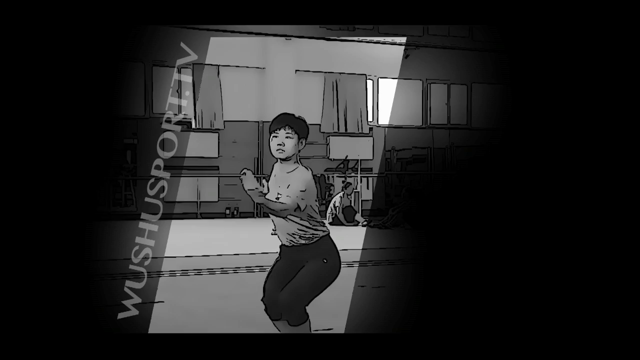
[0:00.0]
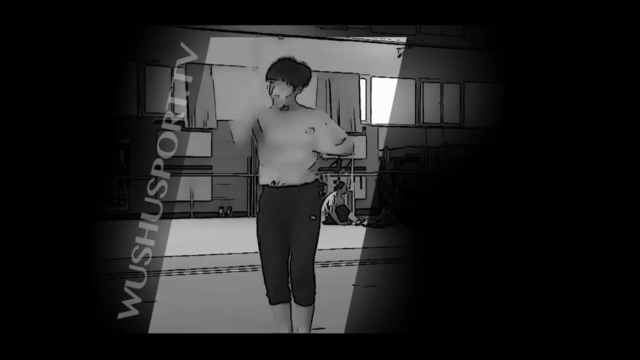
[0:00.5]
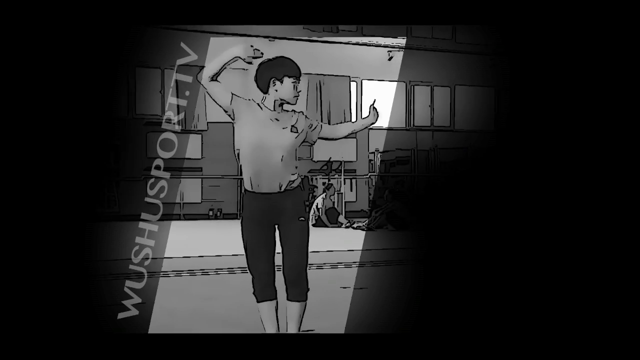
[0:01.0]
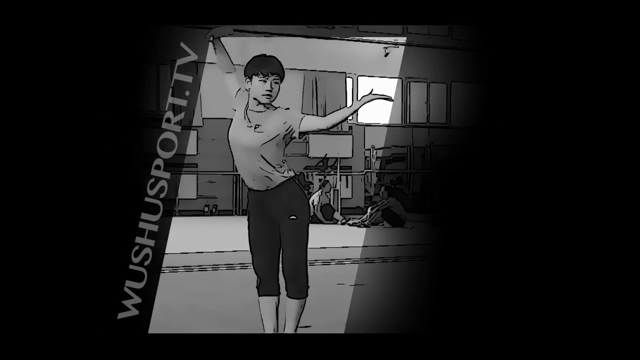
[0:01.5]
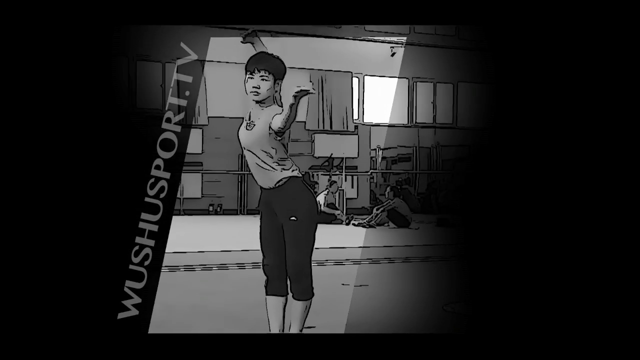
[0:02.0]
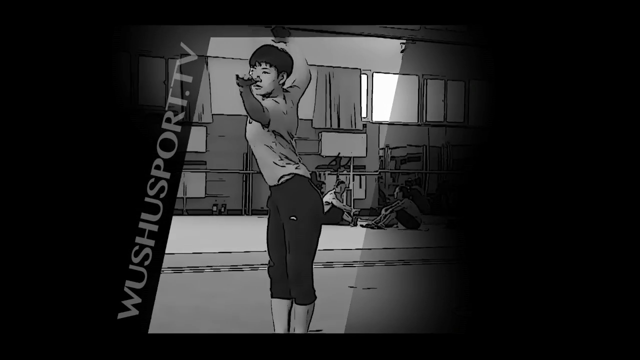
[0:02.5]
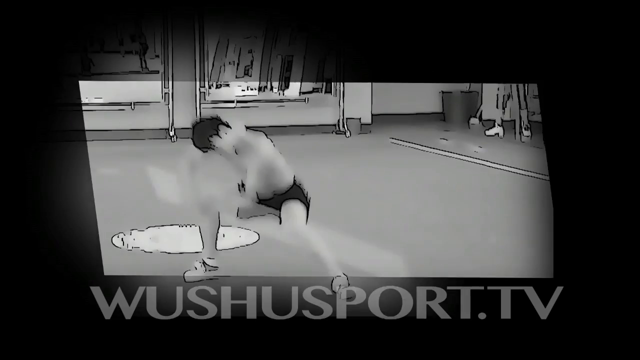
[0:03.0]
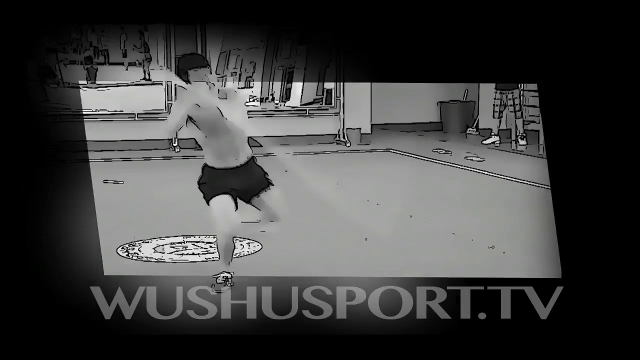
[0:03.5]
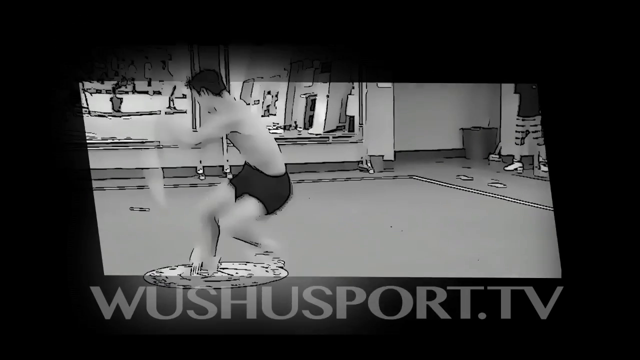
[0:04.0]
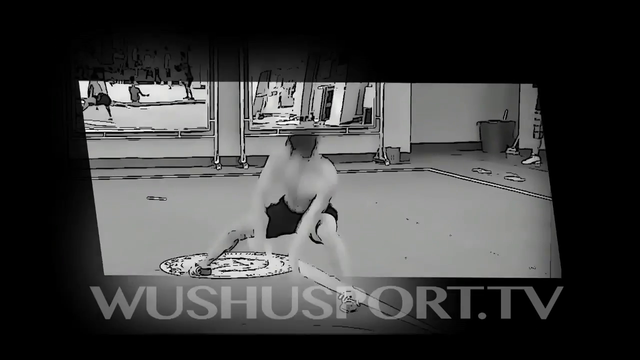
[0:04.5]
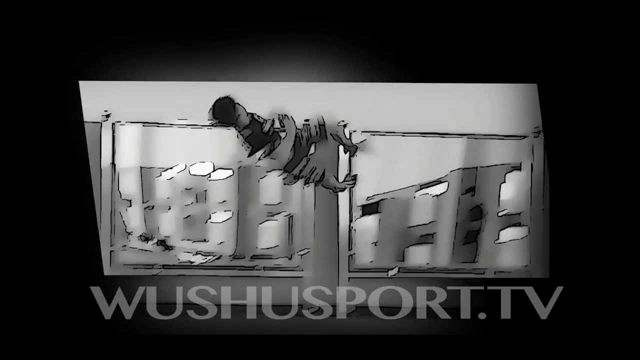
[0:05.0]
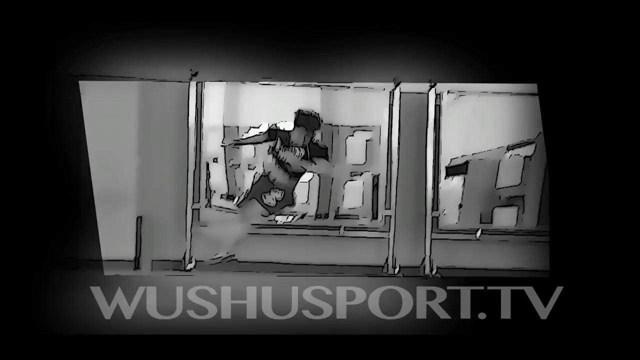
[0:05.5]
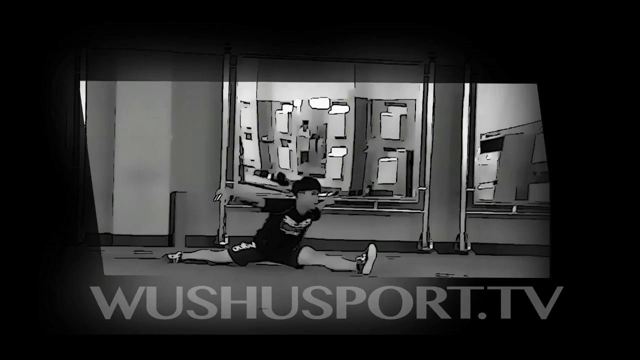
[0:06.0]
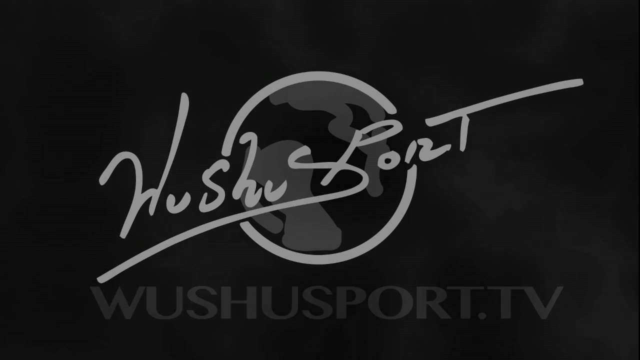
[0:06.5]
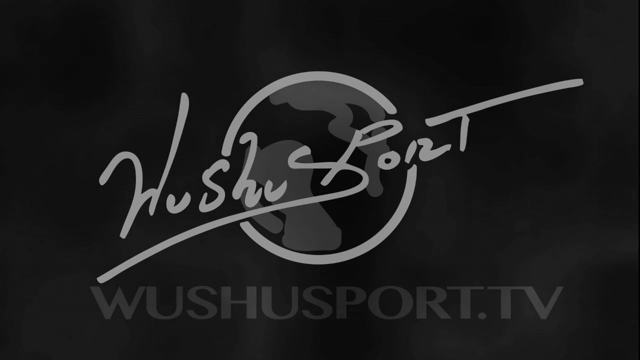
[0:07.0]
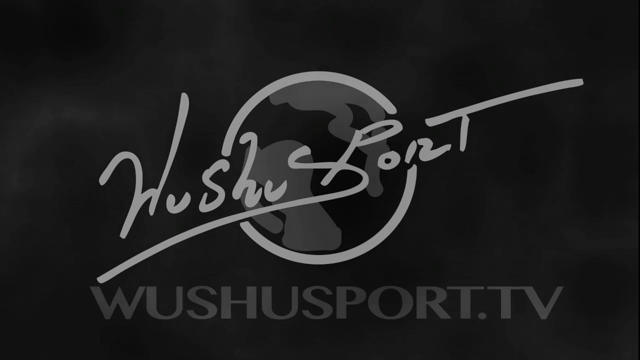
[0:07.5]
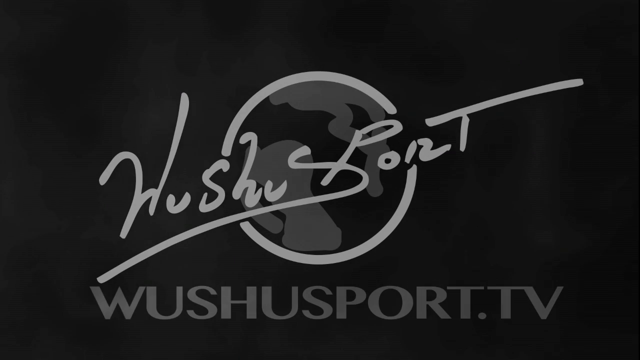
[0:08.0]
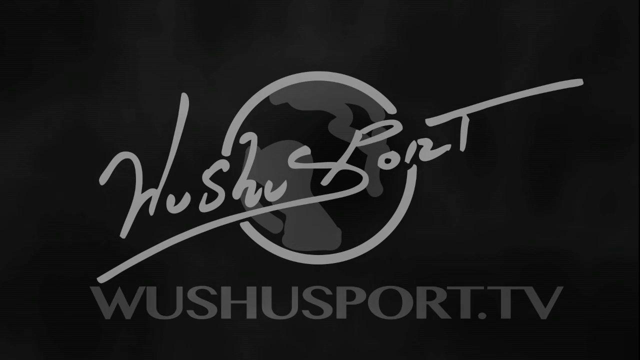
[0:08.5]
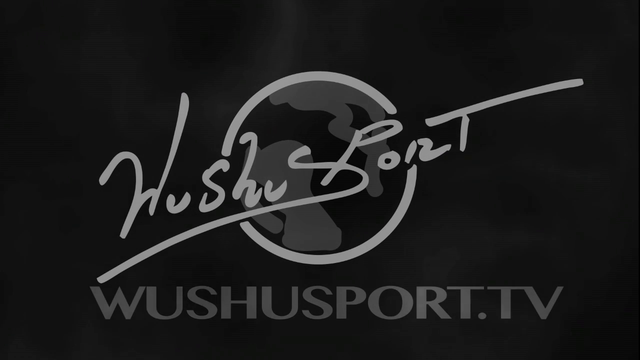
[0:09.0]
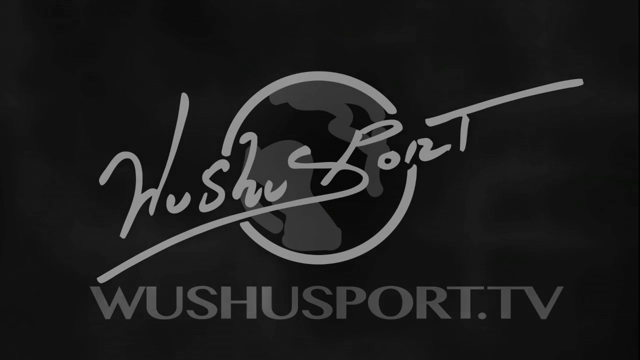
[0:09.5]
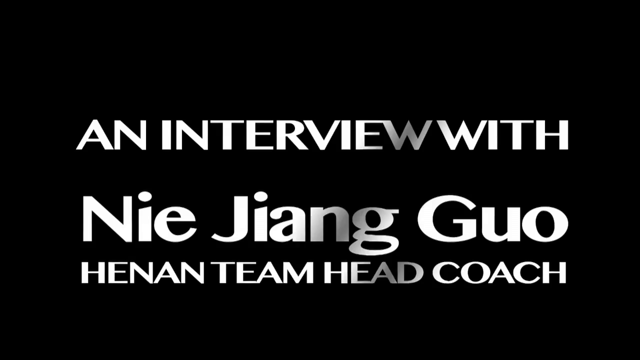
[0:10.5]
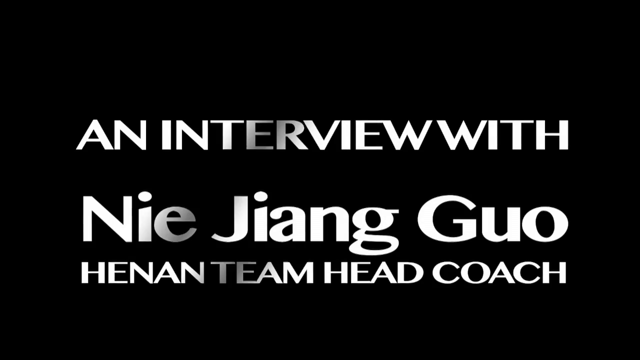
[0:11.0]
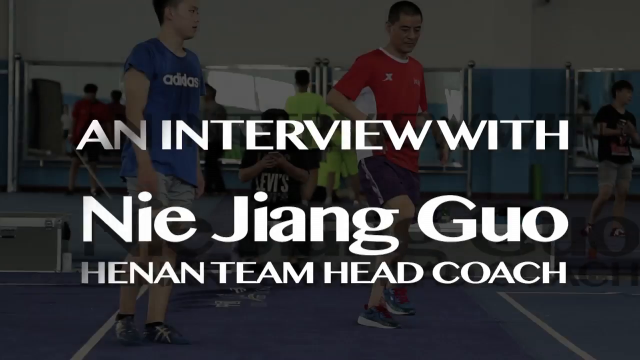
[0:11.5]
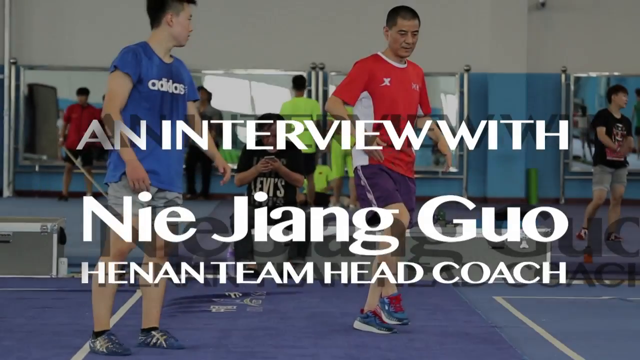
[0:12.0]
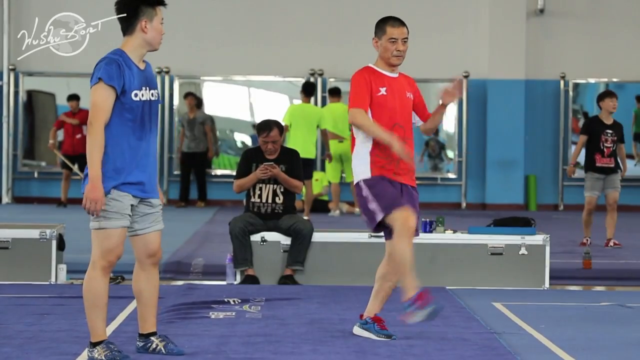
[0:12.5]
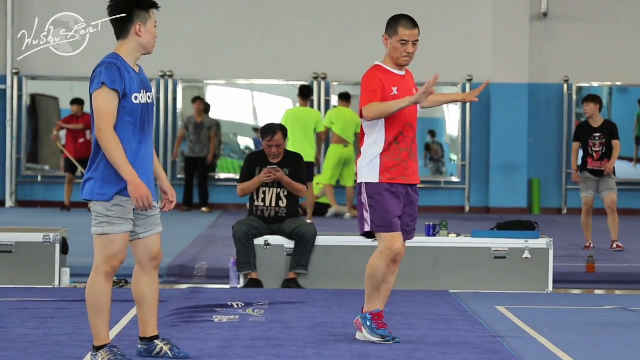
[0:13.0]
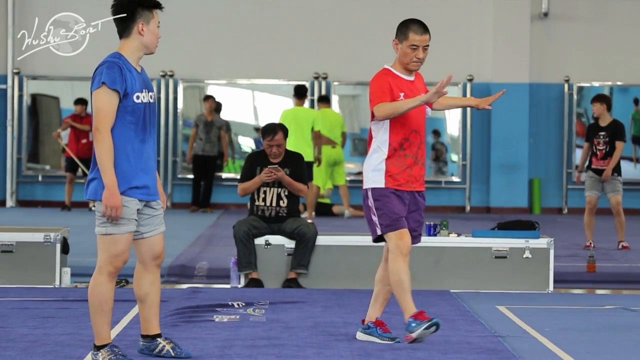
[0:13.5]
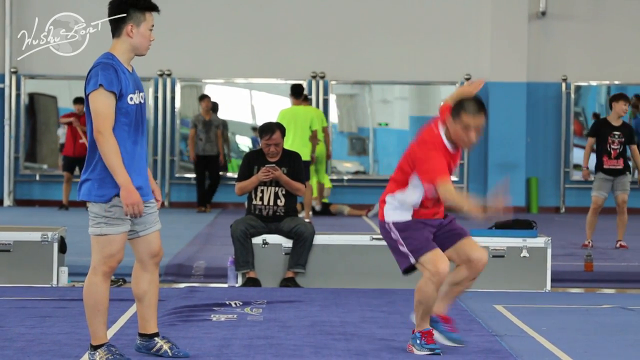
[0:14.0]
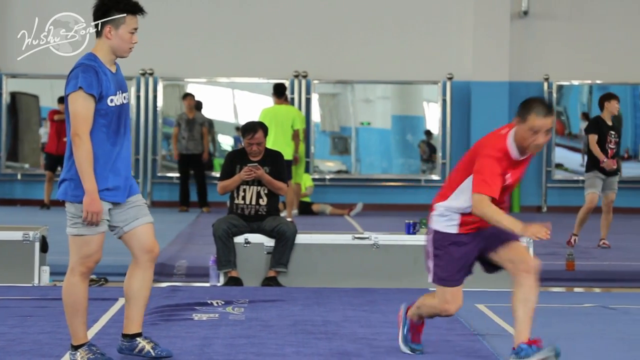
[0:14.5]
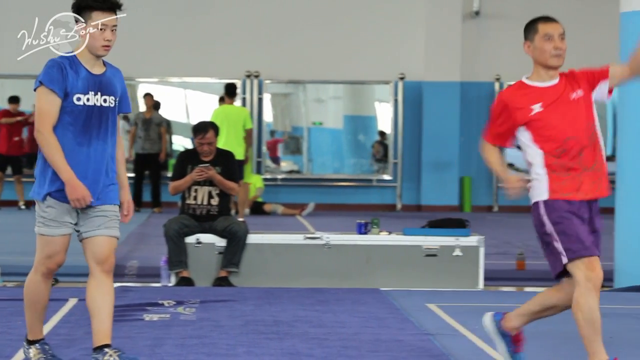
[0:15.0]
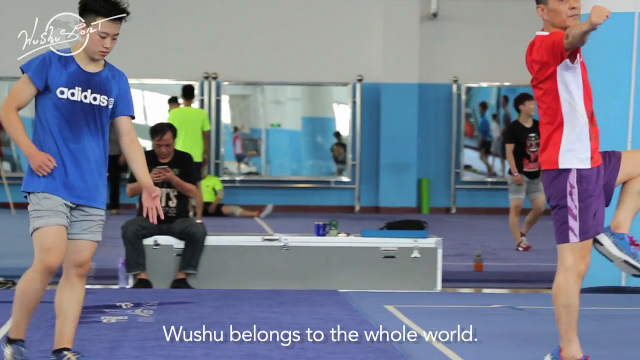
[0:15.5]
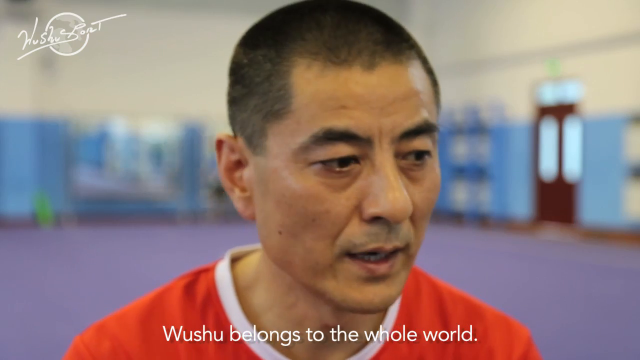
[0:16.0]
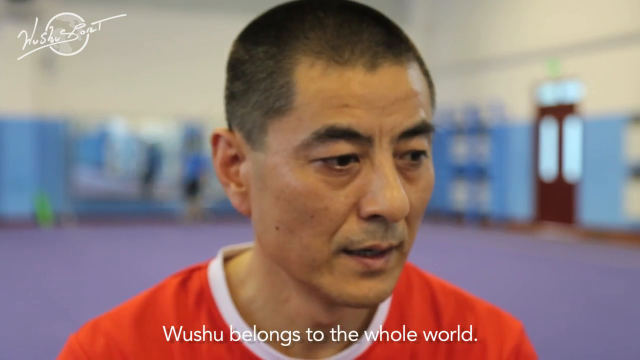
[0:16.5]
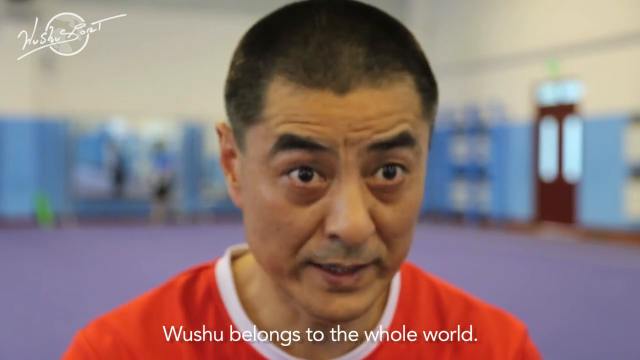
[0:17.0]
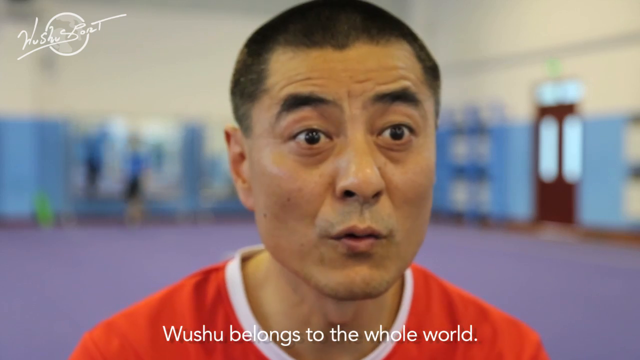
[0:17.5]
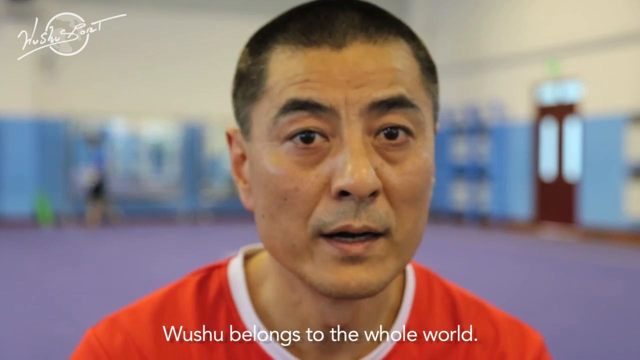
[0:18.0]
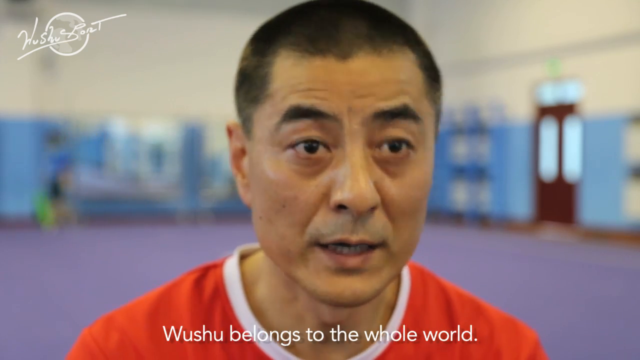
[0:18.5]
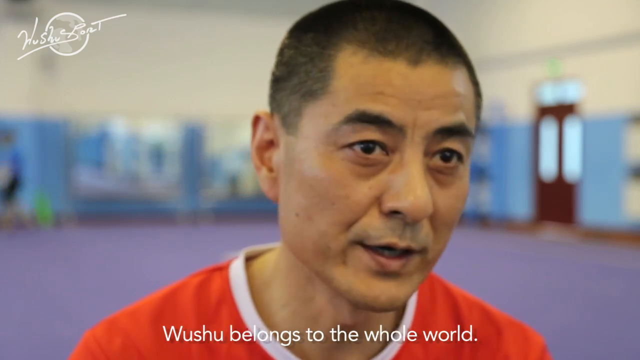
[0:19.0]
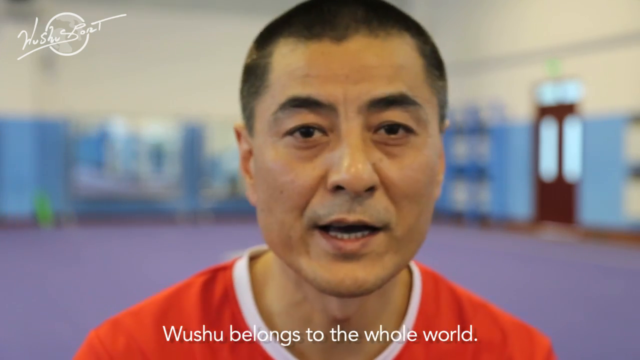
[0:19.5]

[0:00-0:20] A black-and-white video runs vertically on the left side of the screen, with the text "WUSHU SPORT.TV". To the right of it, an Asian girl with short black hair, wearing tight black sweatpants and a short-sleeved gray shirt, poses with her arms up and then slowly spins to the left. The video cuts to another black-and-white video inside a small ring with a mat on the floor, where a man with black hair in black shorts holds a stick, twirling around and twirling the stick. It then cuts to a black-and-white video of a man with black hair in a short-sleeved black shirt and black shorts jumping up in the air and spinning many times, while the words "WUSHU SPORT.TV" run horizontally in white along the bottom of the screen. The screen turns black and text across it reads "an interview with Ni Jiang Gu, Henan team head coach." Next, two men are in a gym with a purple mat floor. The Asian man on the left has black hair and wears gray shorts and a short-sleeved blue shirt with adidas on the front; the man to his right, also Asian, wears a red-and-white striped shirt, purple shorts and blue shoes. Both take steps forward, bringing their knees up to their chests and sticking their arms out.